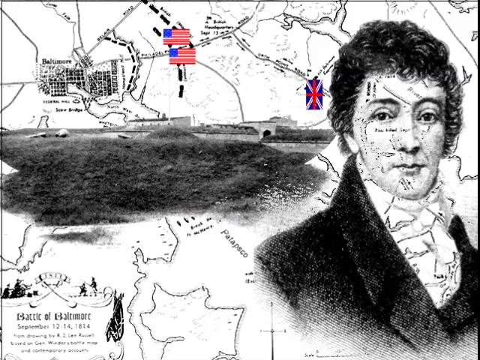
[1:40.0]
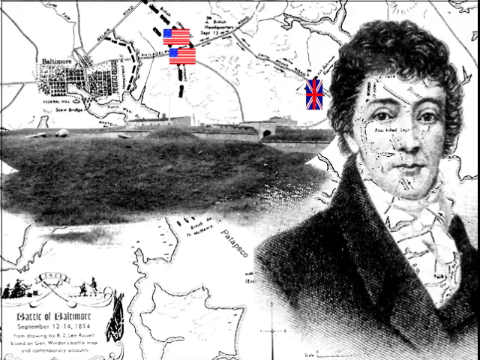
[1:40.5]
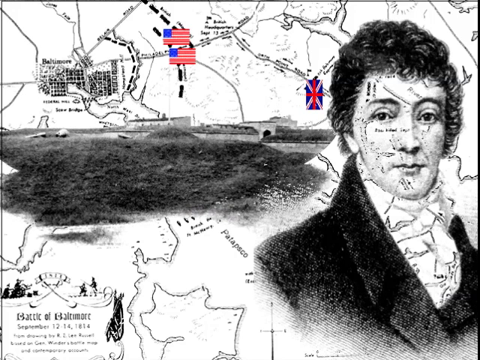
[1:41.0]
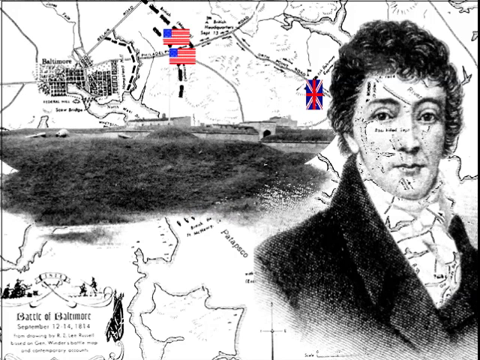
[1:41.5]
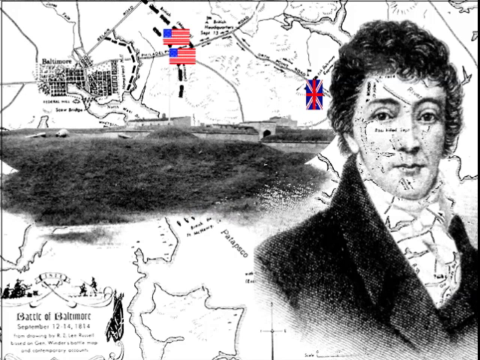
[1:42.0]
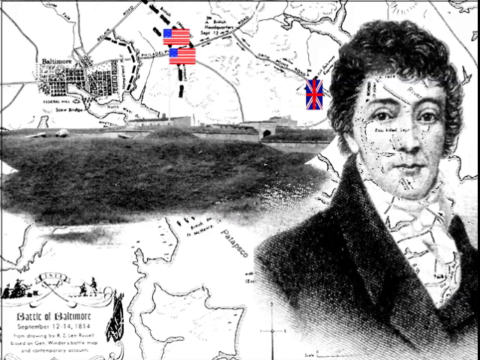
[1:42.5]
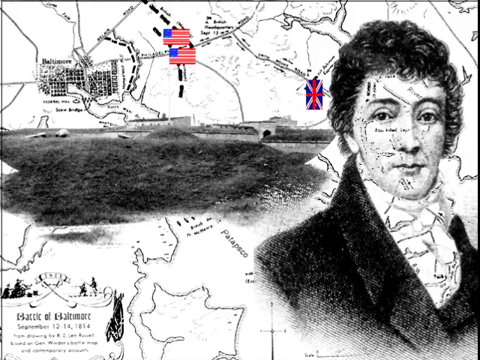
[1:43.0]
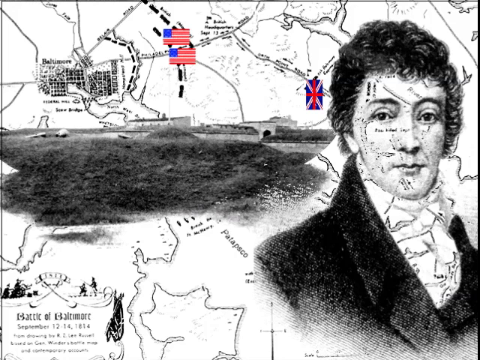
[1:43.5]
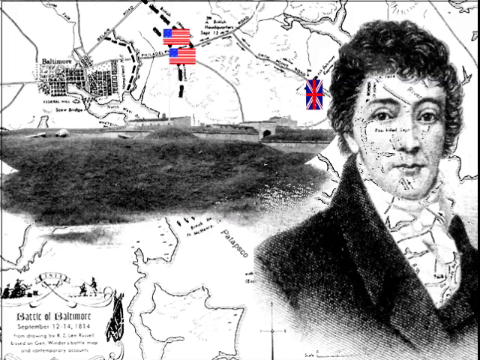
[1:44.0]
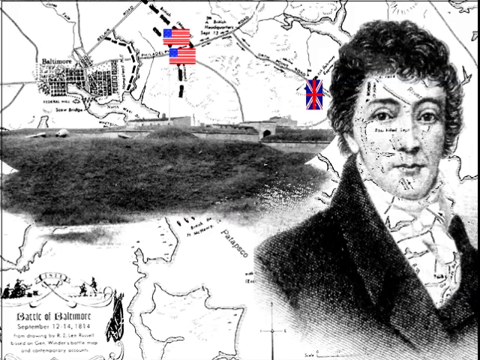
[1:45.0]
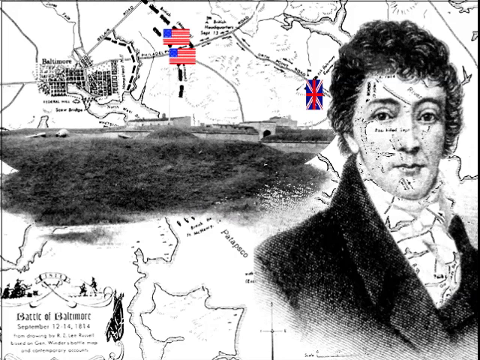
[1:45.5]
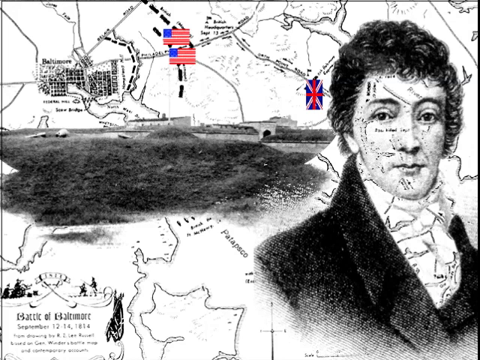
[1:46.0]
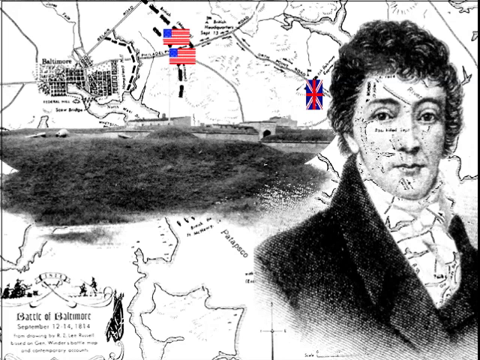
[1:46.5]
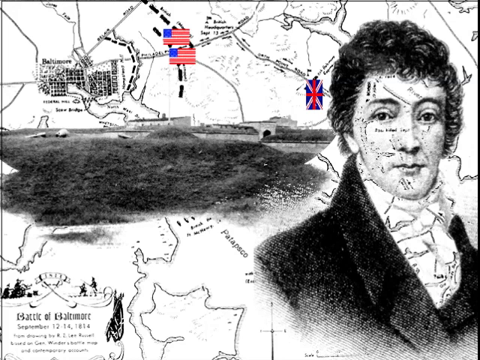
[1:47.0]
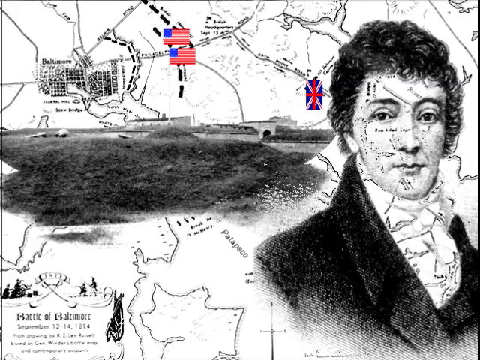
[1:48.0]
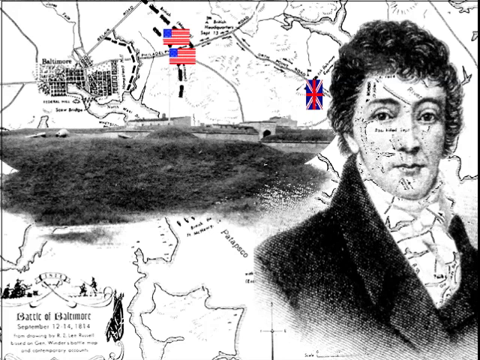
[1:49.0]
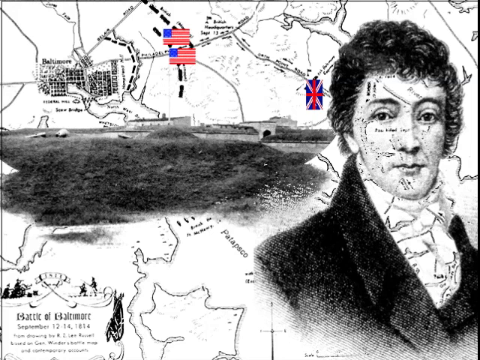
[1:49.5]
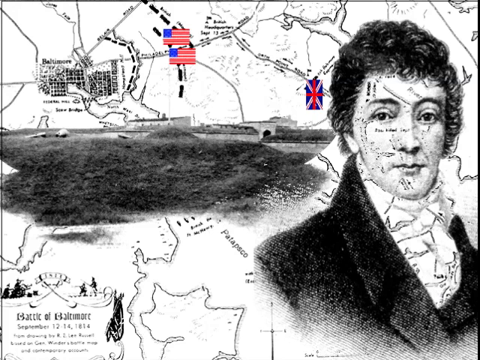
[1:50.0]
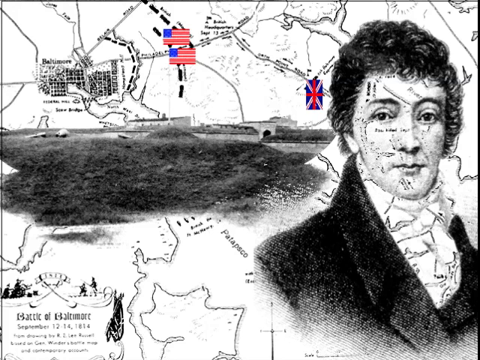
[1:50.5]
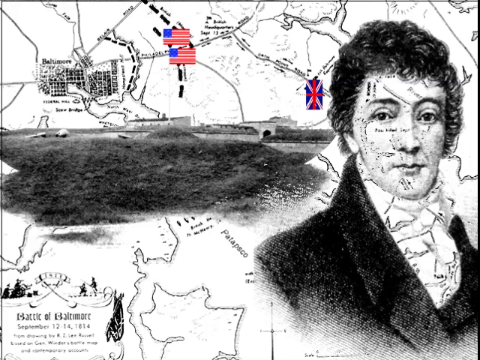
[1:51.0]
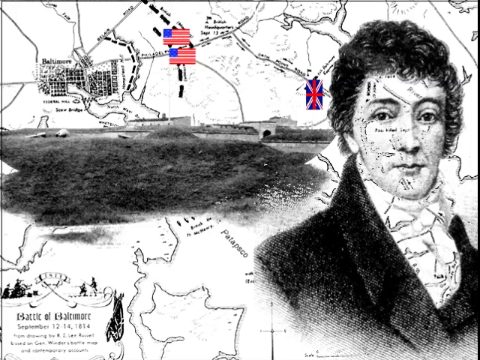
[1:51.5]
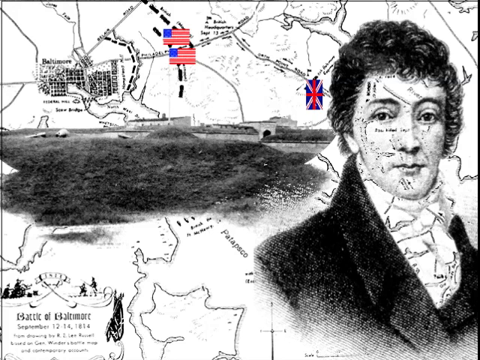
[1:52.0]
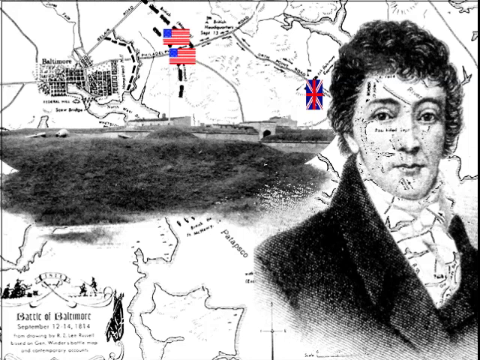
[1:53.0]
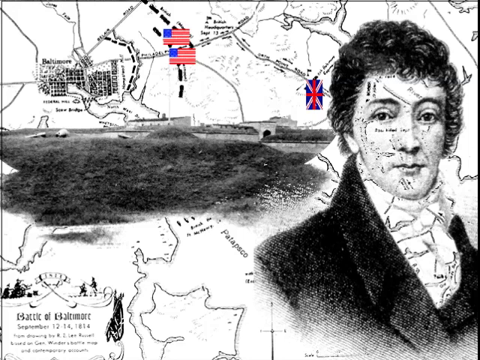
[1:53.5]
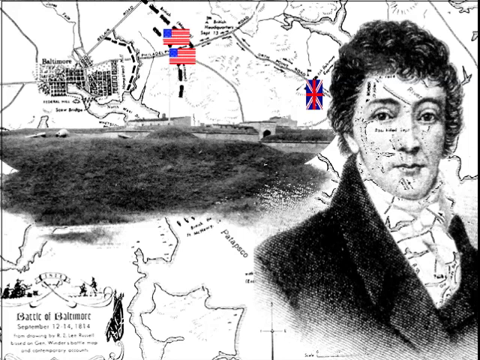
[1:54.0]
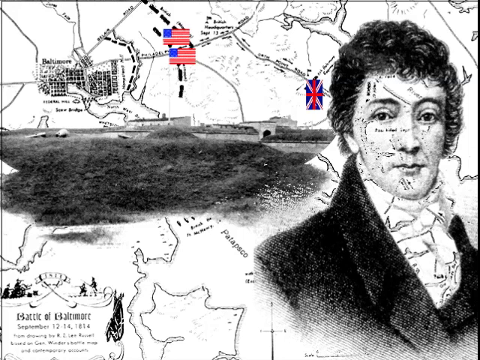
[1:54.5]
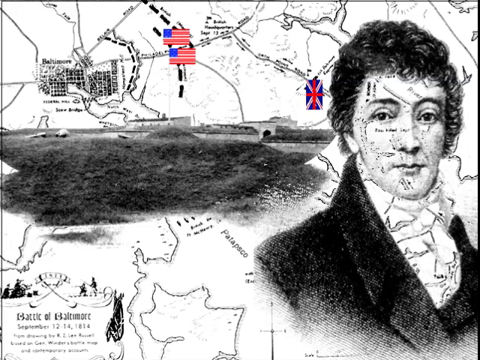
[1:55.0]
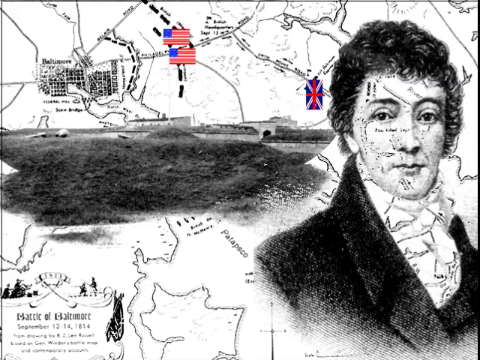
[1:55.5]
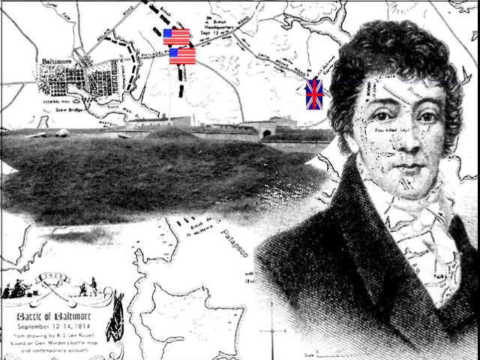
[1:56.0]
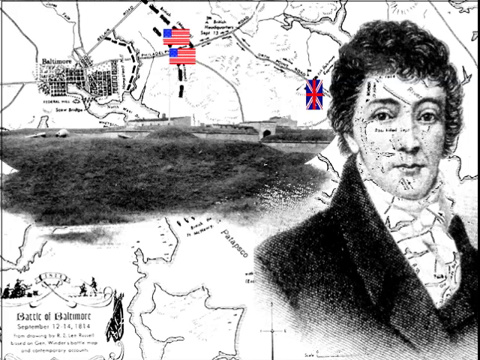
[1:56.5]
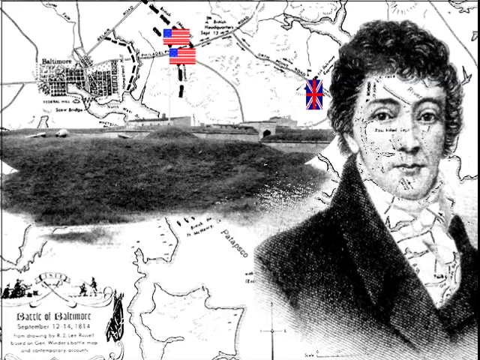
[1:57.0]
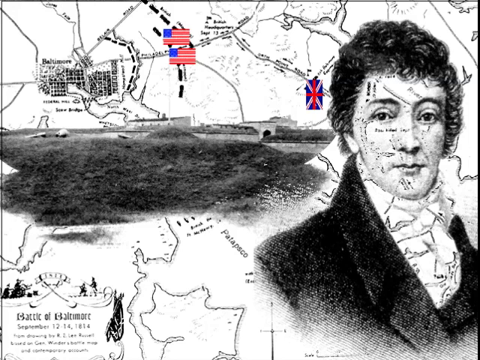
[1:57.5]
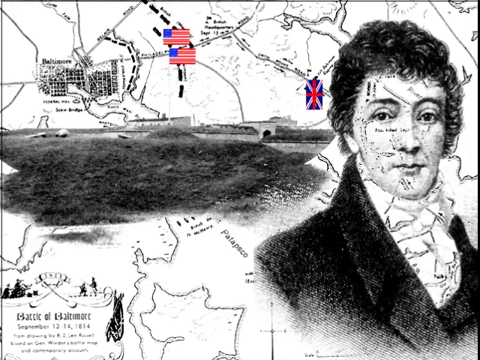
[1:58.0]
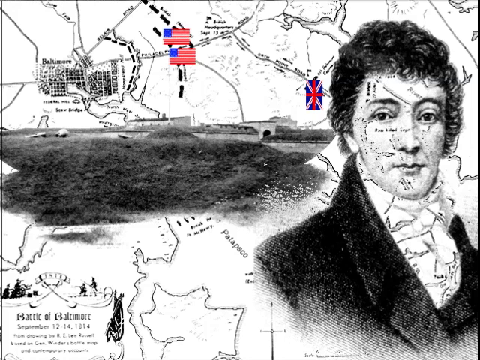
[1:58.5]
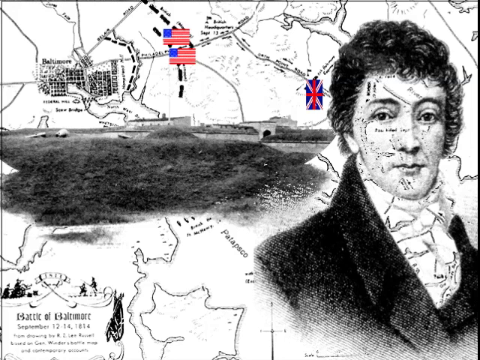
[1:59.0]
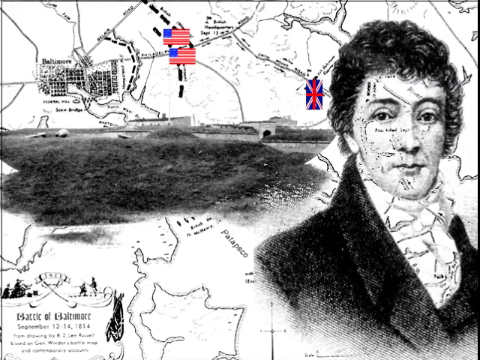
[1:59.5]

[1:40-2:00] A section of land is shown along with a man wearing an ascot and a black overcoat, with wavy hair, apparently of European descent. His face is superimposed over a map, drawn in black ink, of the area where the Battle of Baltimore took place between Great Britain and the United States, represented by flags of both nations. The map shows a waterway, the Patapasco River, and branches of the river that extend inland. It shows where Great Britain's ships apparently enter the harbor; its soldiers then march inland, apparently northward, confront the American military and push them back until they retreat on their own quite a distance away. The video then transitions to a black and white image of a massive land and what appears to be a waterway, with some buildings and an image of what appears to be a European man in a white ascot and black overcoat. Most of the work is drawn.